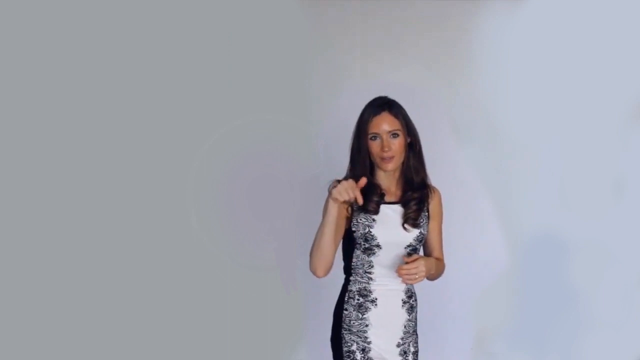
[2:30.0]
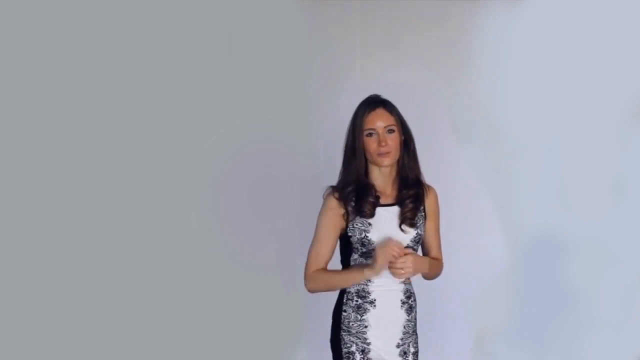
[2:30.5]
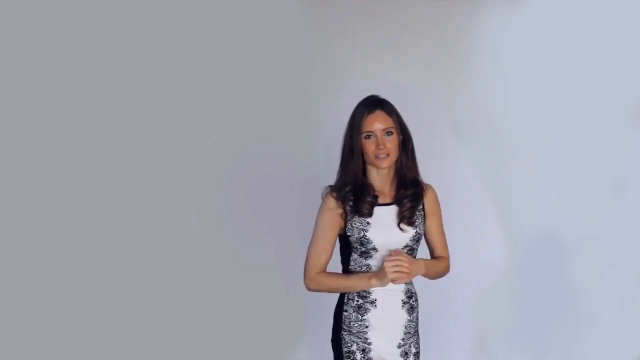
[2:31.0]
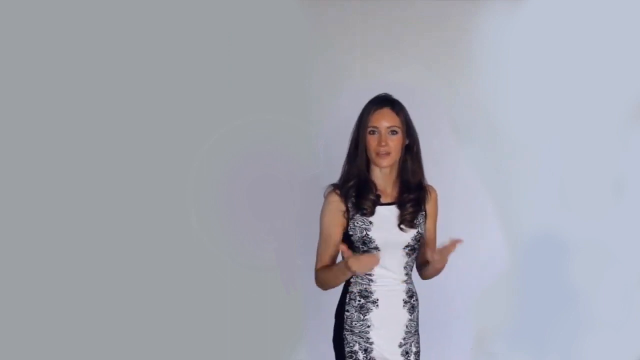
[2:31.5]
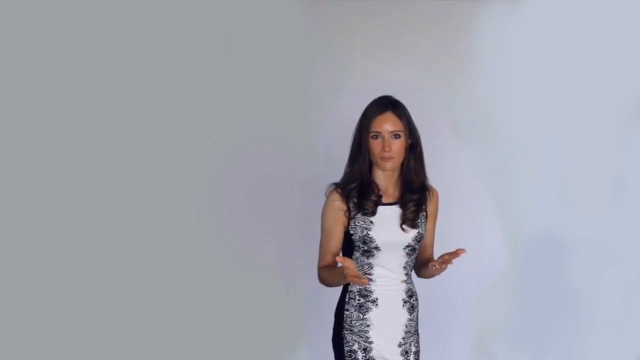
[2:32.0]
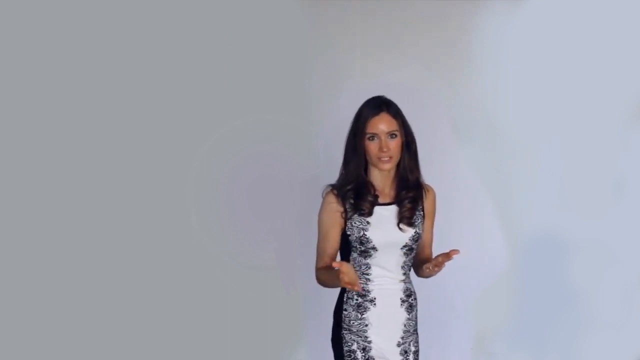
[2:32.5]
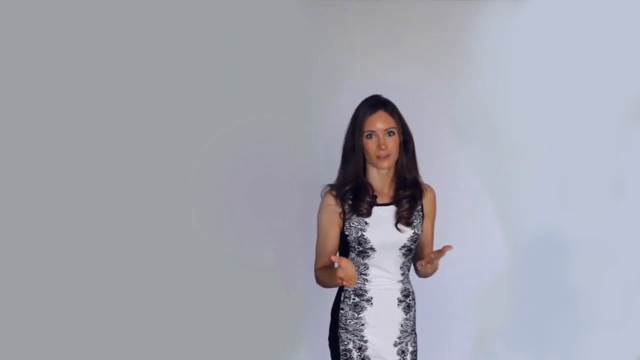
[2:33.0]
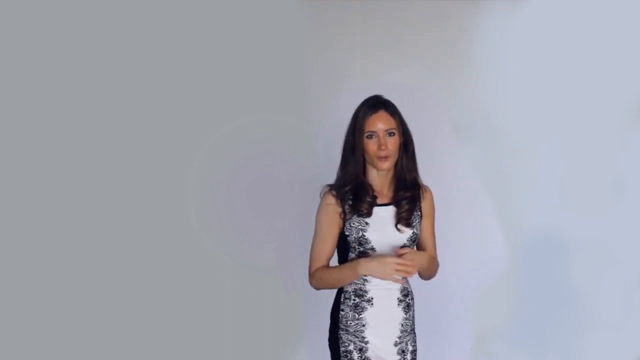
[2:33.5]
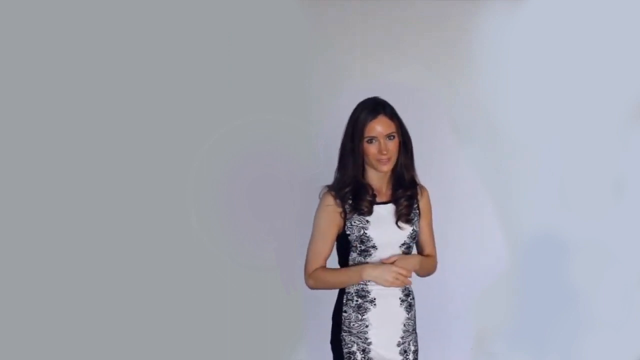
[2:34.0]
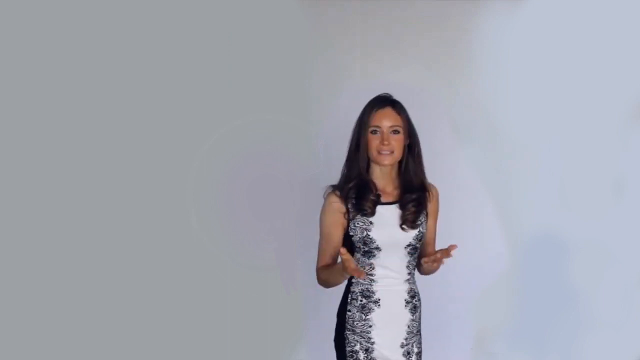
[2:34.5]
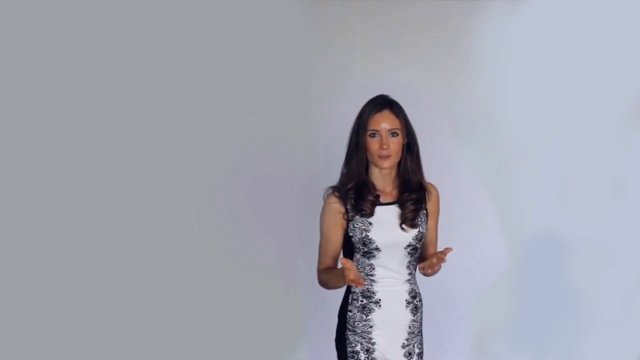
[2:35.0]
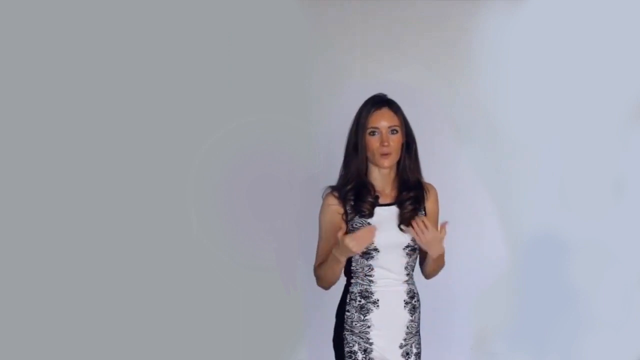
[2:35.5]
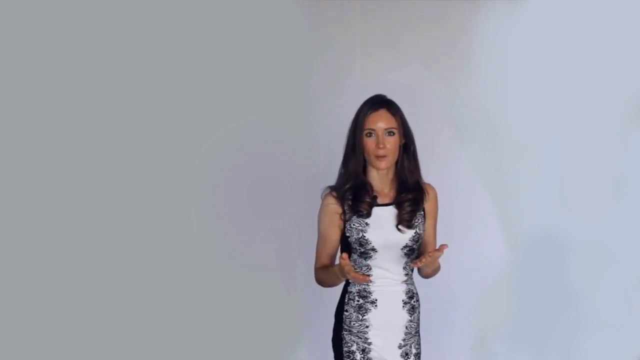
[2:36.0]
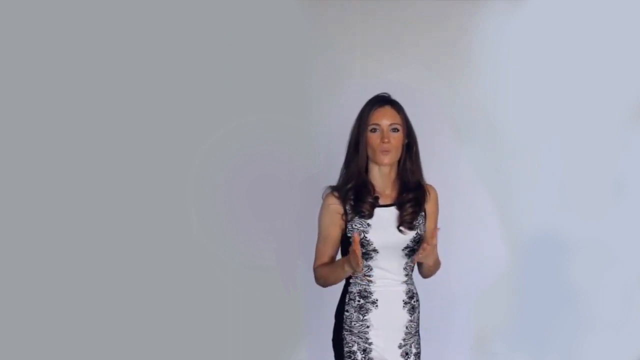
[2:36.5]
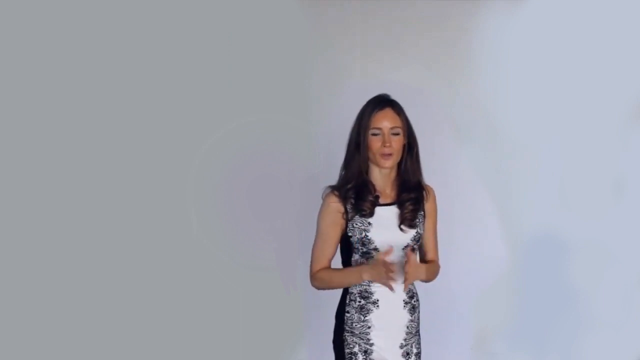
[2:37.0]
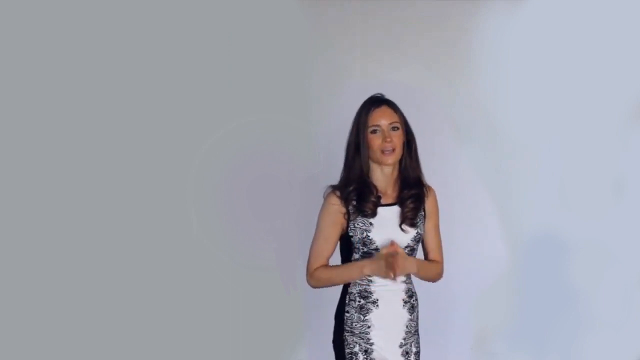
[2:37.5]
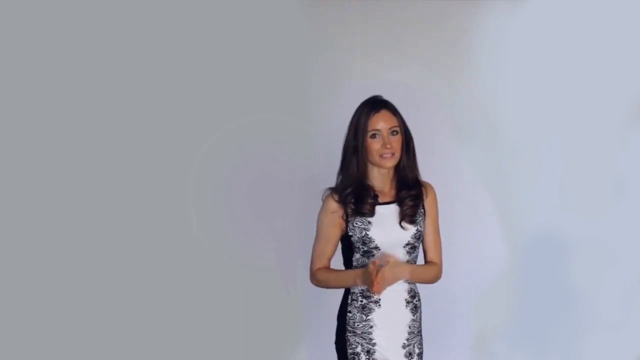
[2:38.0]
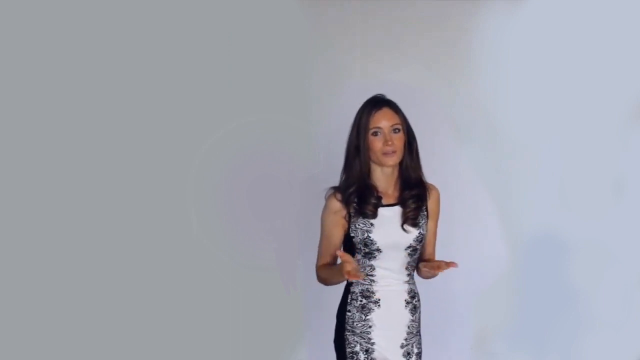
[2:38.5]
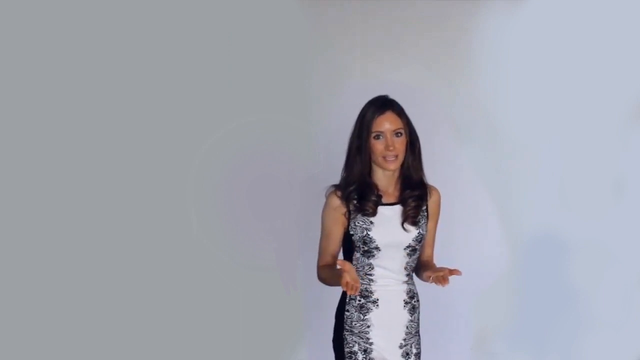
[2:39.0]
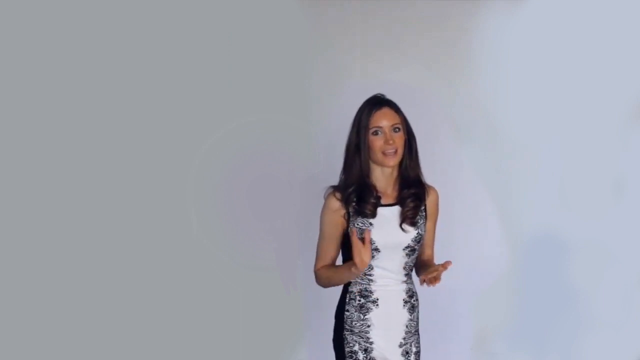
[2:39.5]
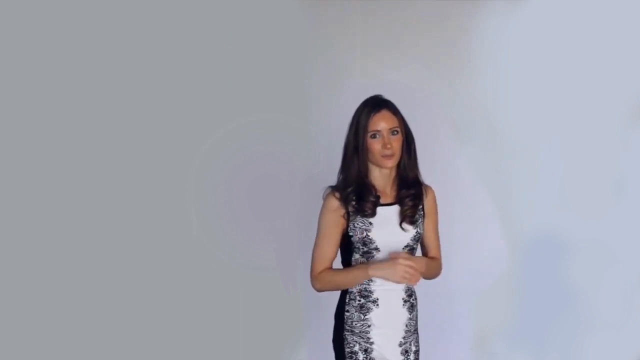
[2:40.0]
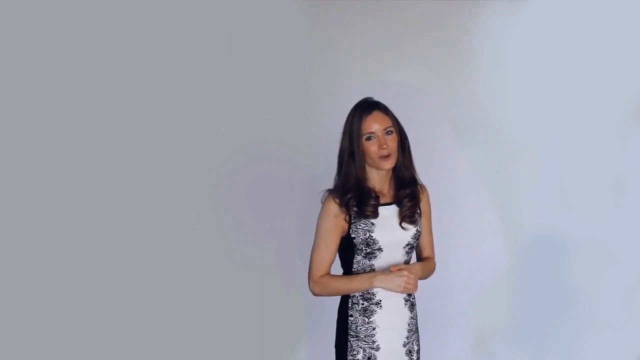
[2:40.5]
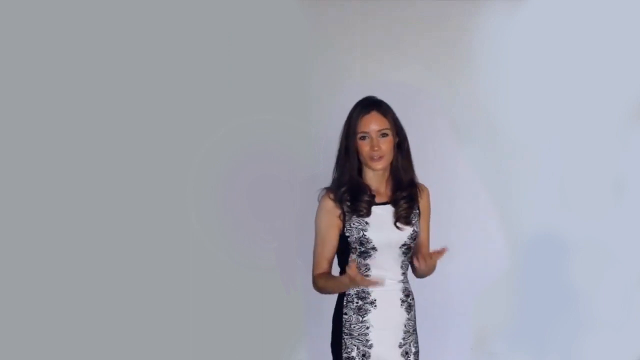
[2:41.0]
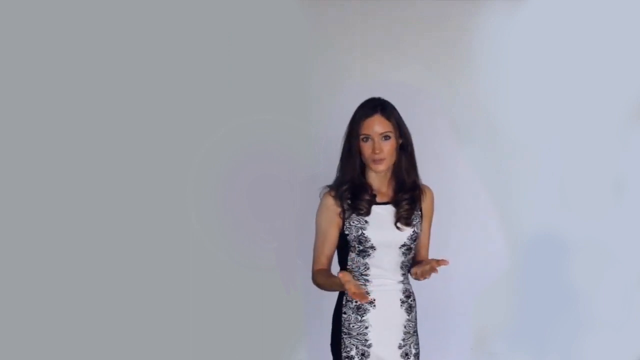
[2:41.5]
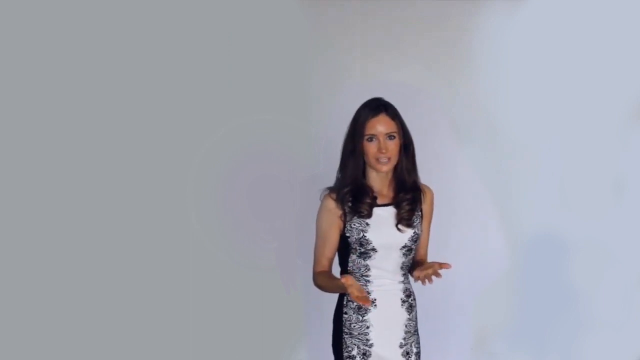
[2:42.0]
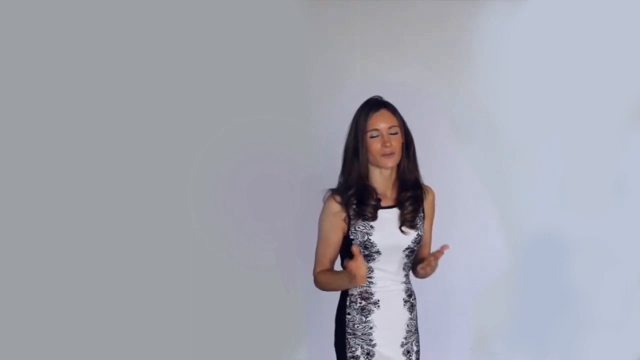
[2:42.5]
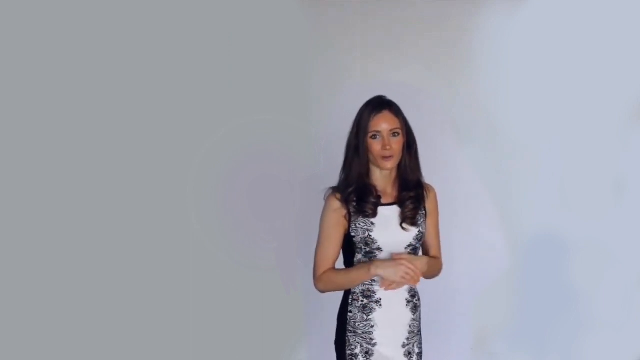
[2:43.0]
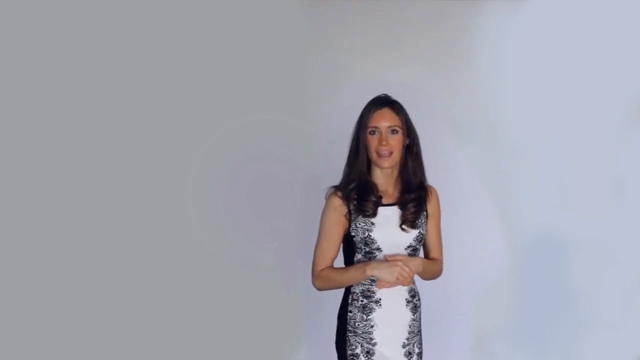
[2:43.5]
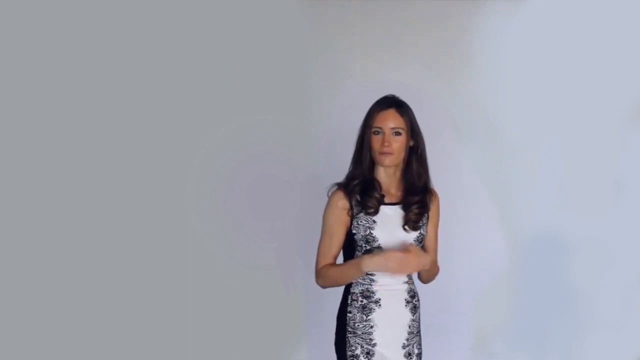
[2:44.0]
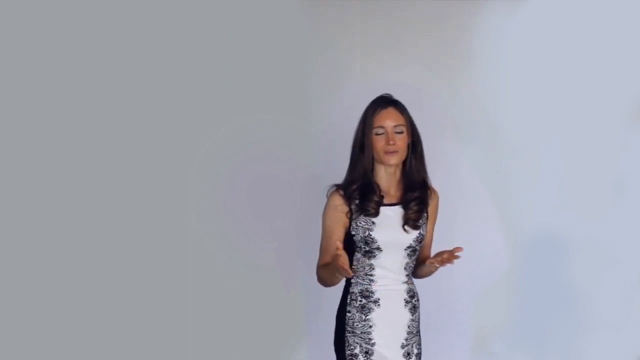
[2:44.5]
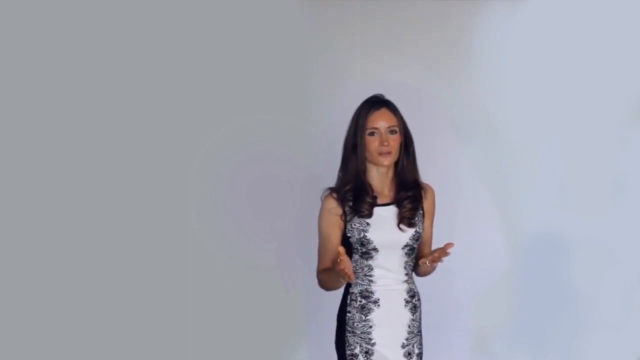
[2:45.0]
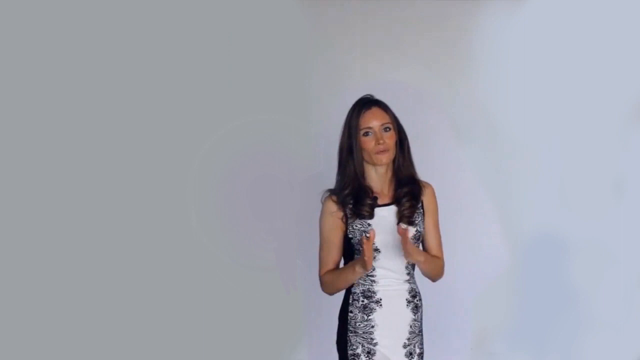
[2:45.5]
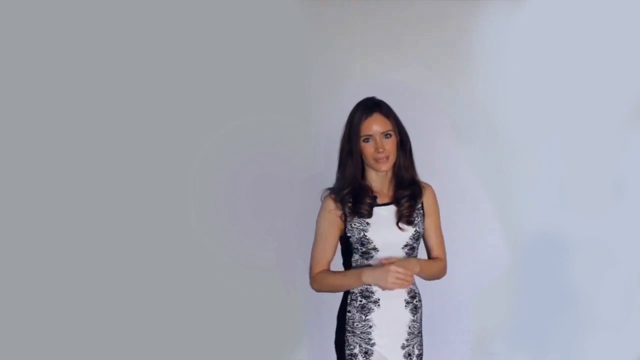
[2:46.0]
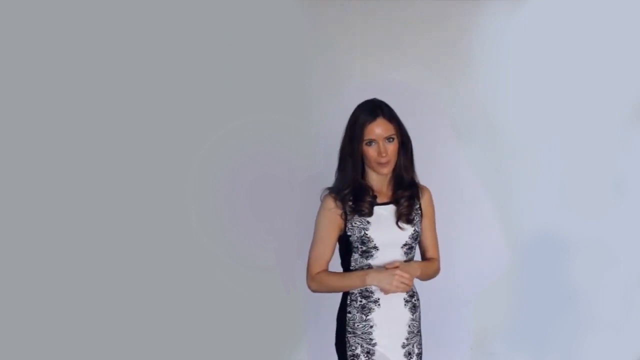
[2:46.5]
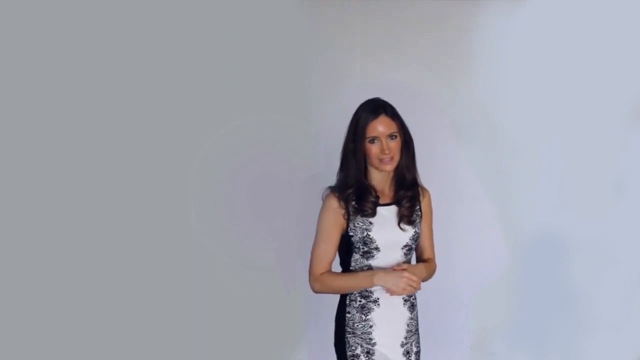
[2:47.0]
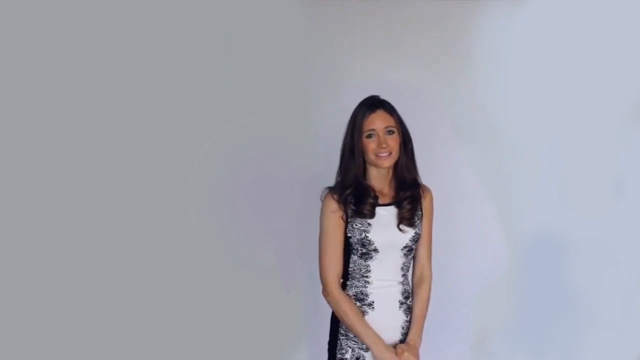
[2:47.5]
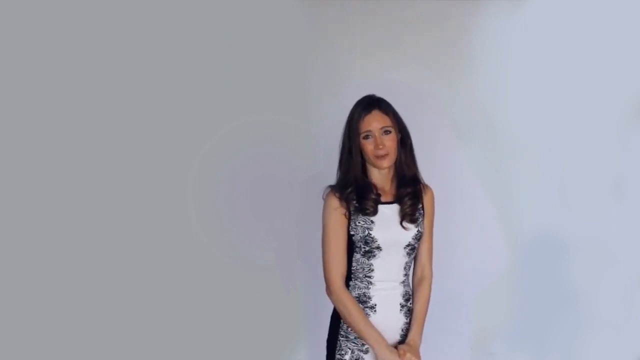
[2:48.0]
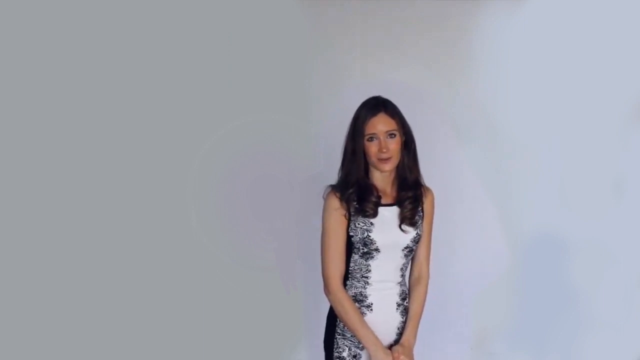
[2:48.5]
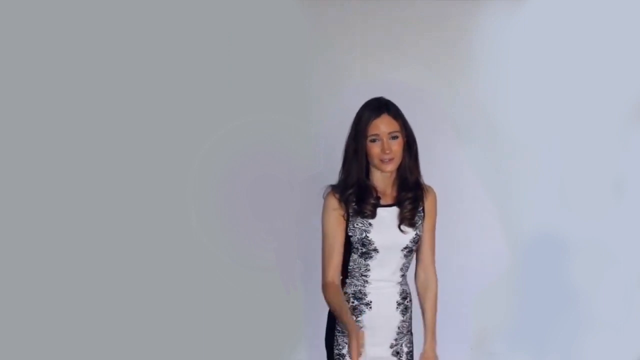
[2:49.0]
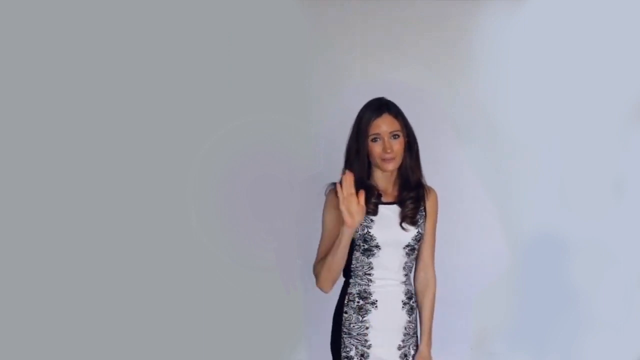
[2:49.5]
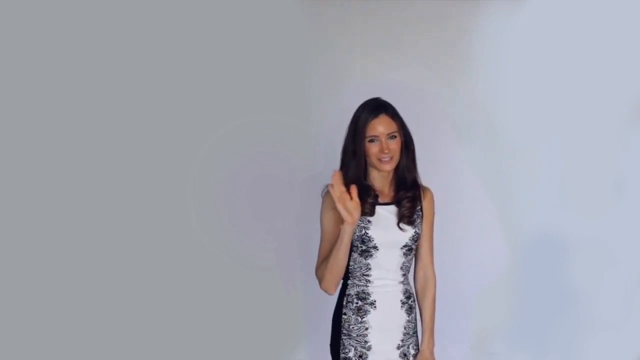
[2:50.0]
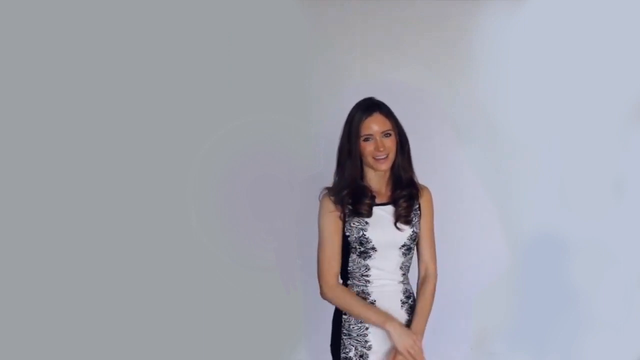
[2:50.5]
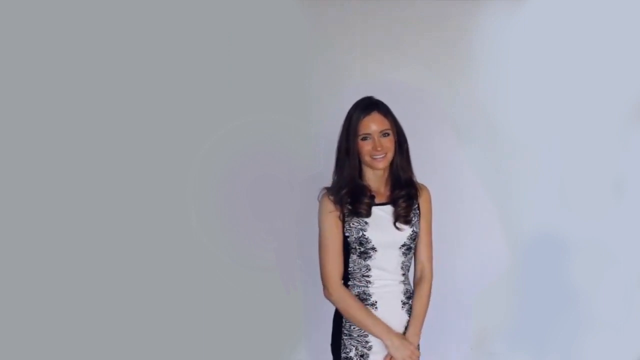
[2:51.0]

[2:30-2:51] Toward the right side, a woman in a white and black floral-patterned dress speaks into the camera against a white background, with nothing else in the shot: no text, font or graphics. She has brown hair with sort of soft curls at the ends, a slightly shiny forehead and somewhat heavy eye makeup. She is very animated with her hands, repeatedly making motions sort of toward her stomach and back out, looking directly into the camera. Toward the end she gives a little wave goodbye to the camera. The footage is a little grainy and definitely amateur-looking, not like a professional production.